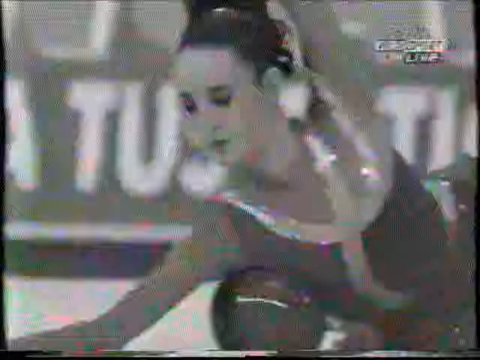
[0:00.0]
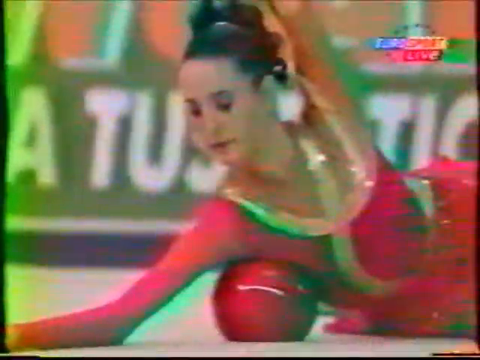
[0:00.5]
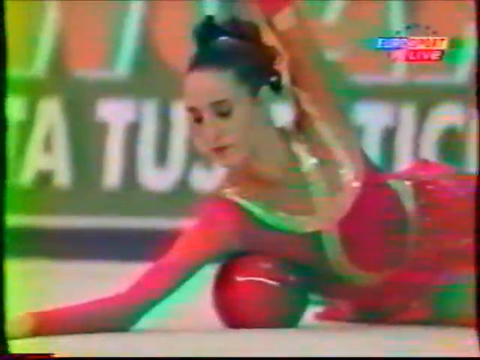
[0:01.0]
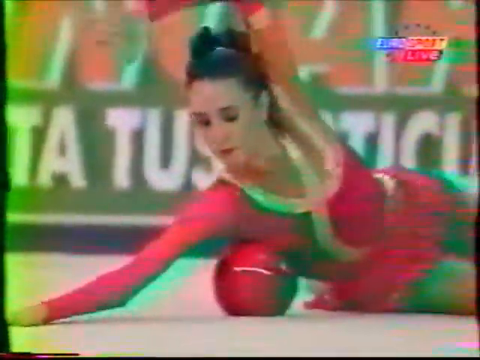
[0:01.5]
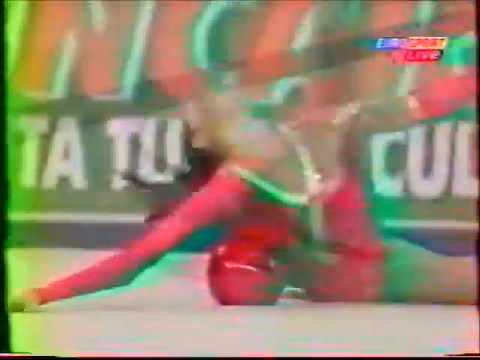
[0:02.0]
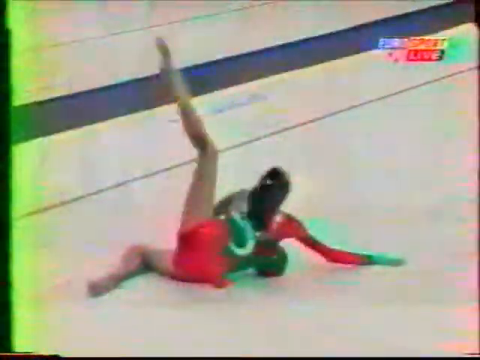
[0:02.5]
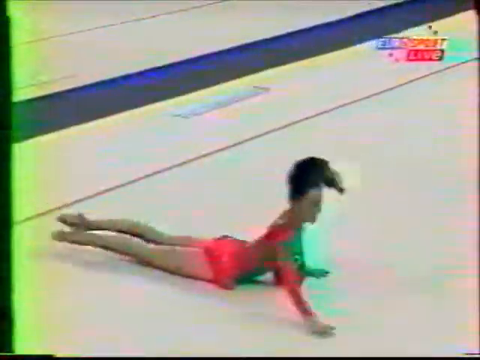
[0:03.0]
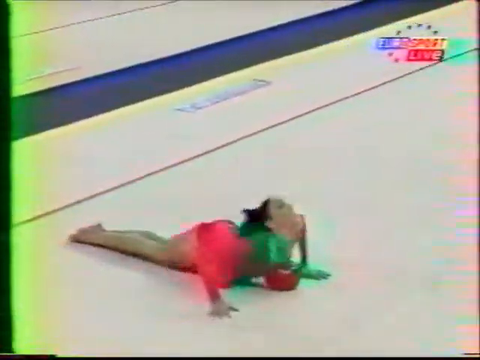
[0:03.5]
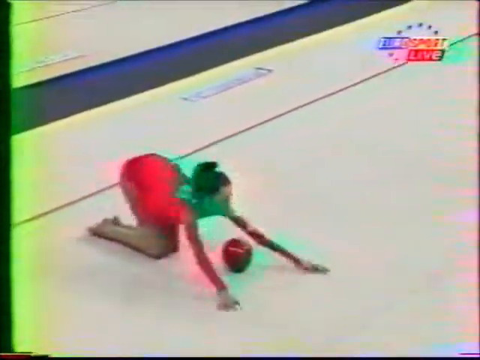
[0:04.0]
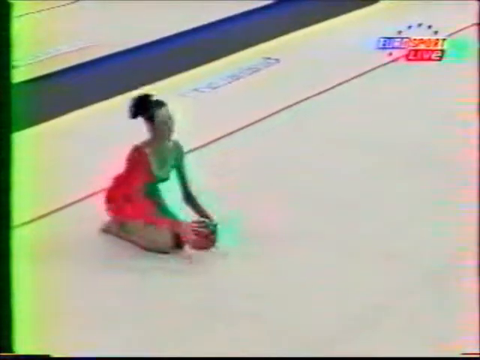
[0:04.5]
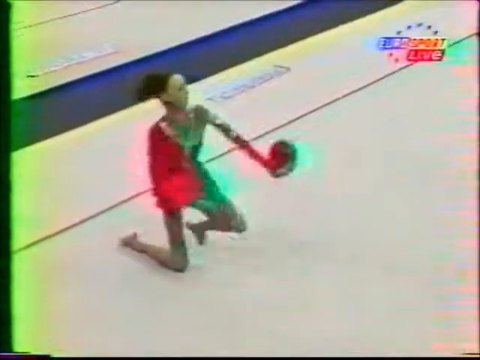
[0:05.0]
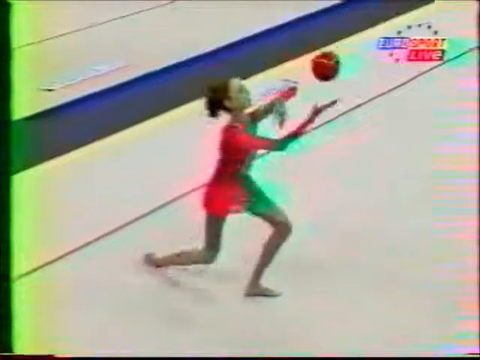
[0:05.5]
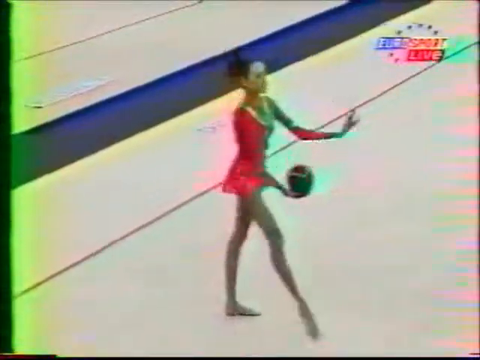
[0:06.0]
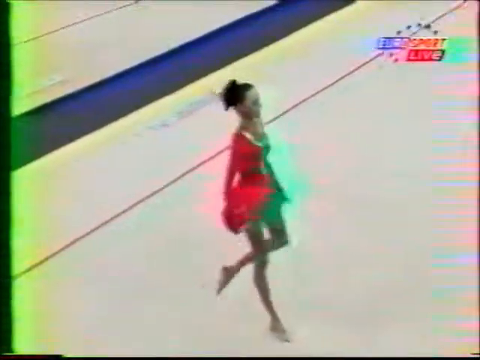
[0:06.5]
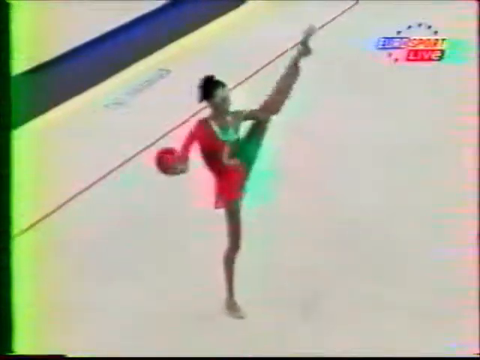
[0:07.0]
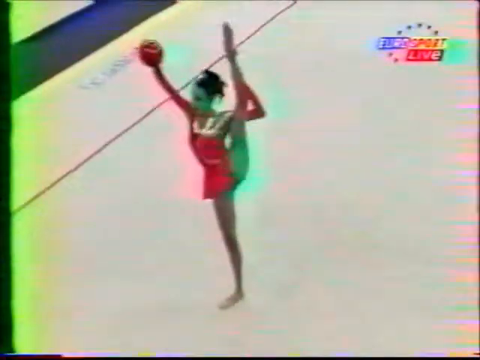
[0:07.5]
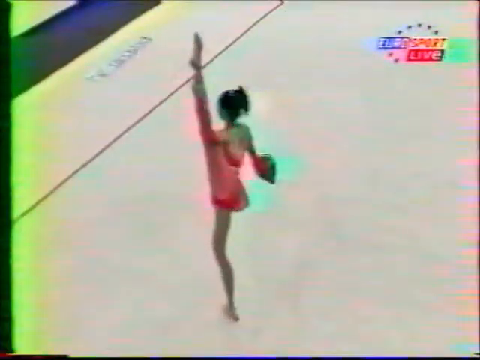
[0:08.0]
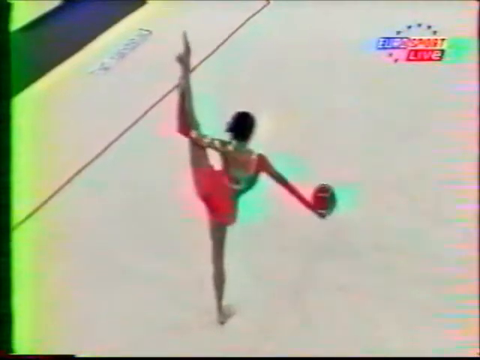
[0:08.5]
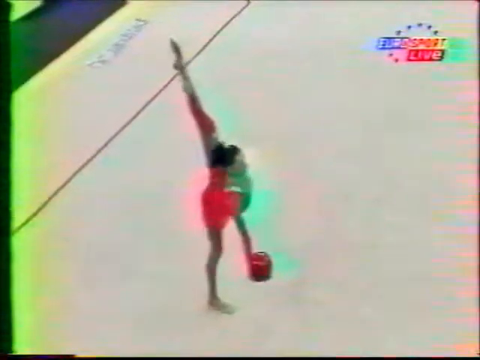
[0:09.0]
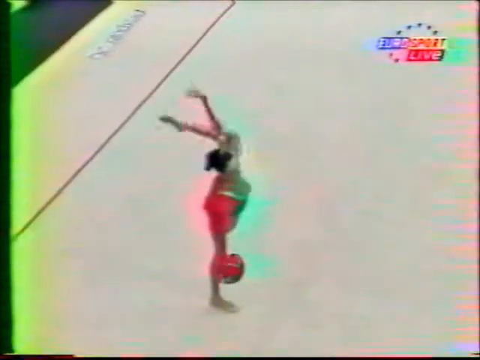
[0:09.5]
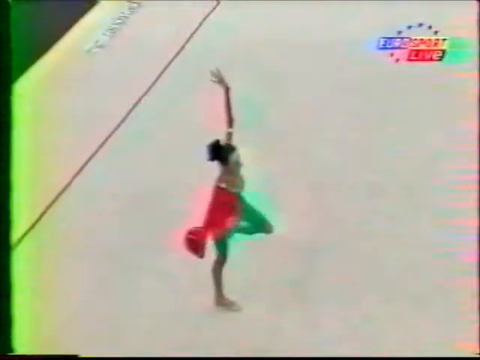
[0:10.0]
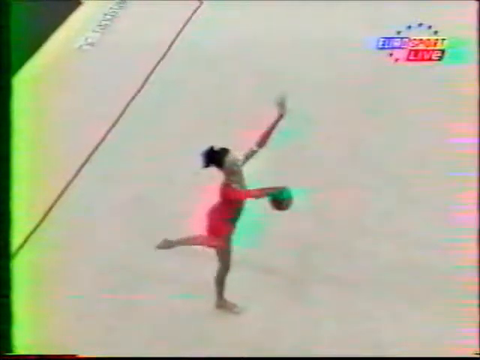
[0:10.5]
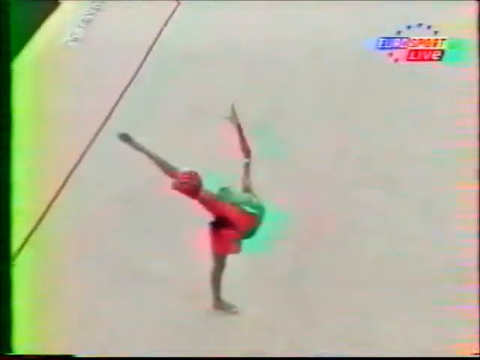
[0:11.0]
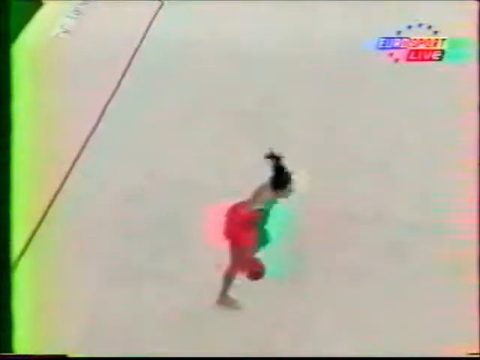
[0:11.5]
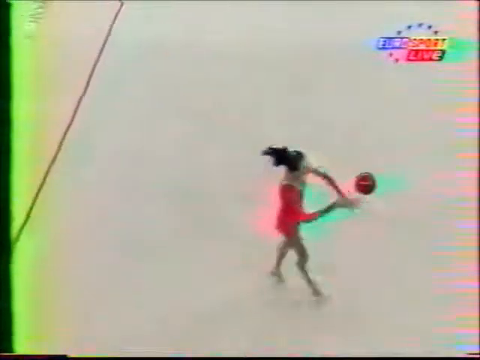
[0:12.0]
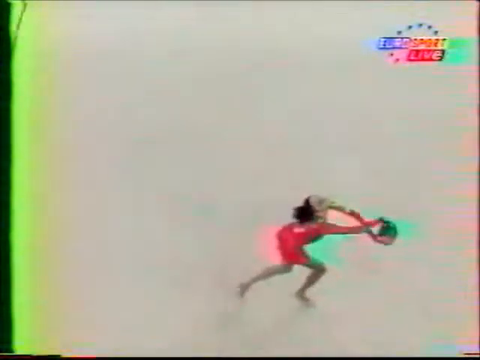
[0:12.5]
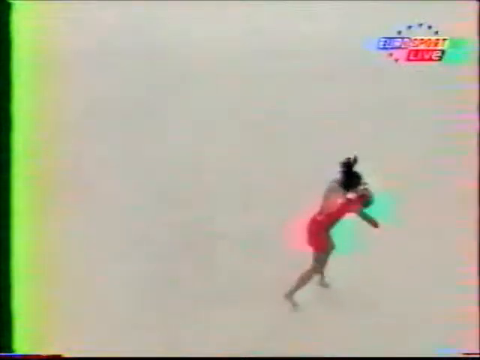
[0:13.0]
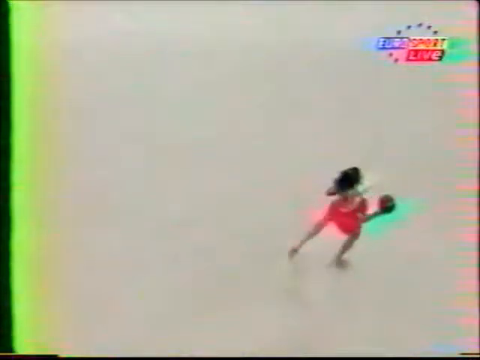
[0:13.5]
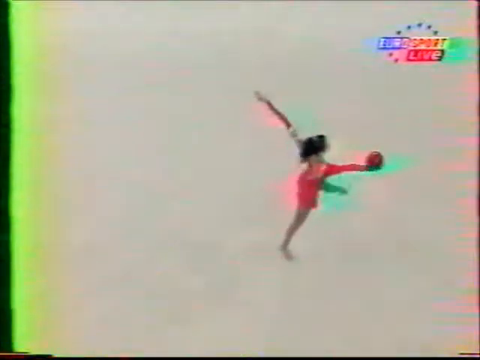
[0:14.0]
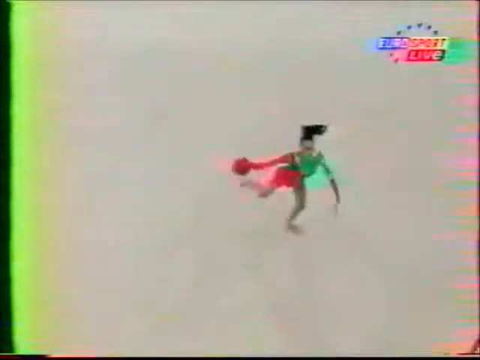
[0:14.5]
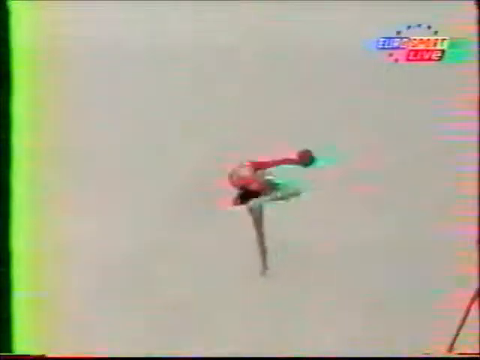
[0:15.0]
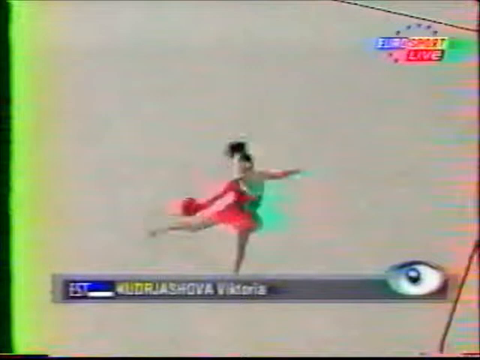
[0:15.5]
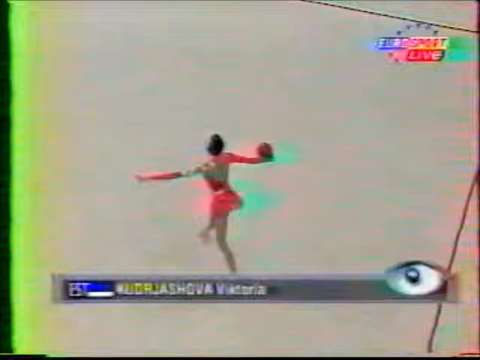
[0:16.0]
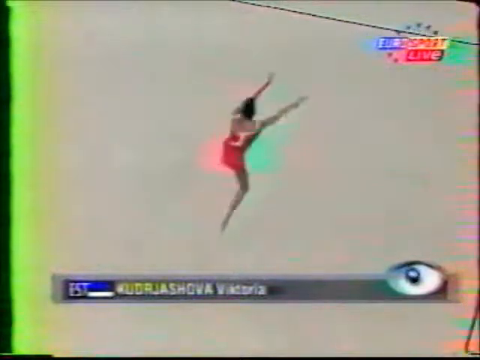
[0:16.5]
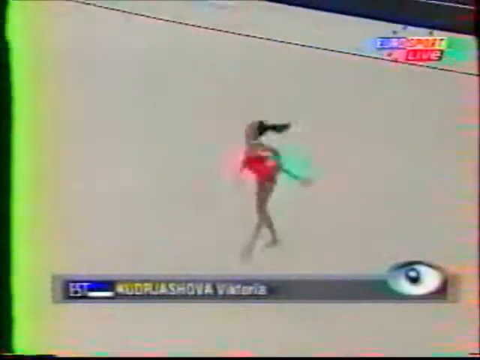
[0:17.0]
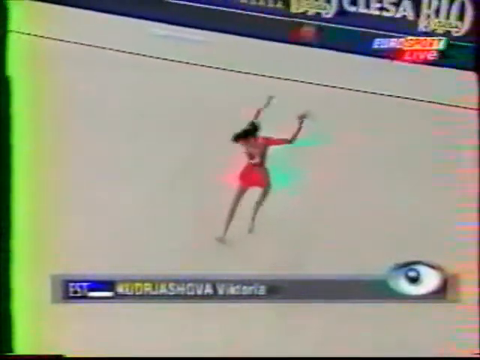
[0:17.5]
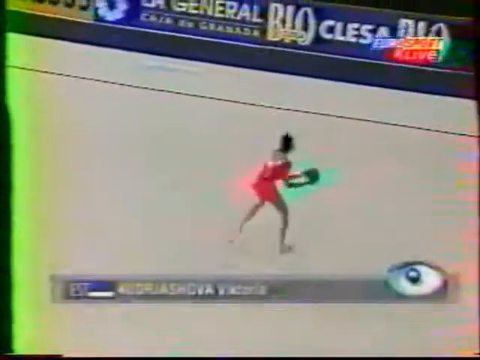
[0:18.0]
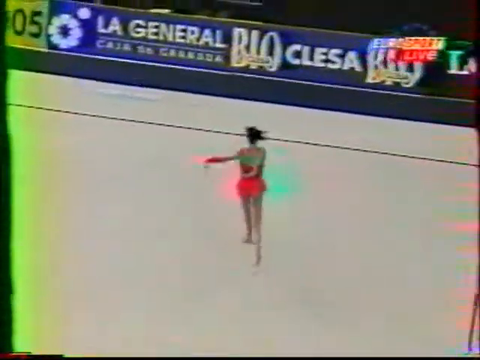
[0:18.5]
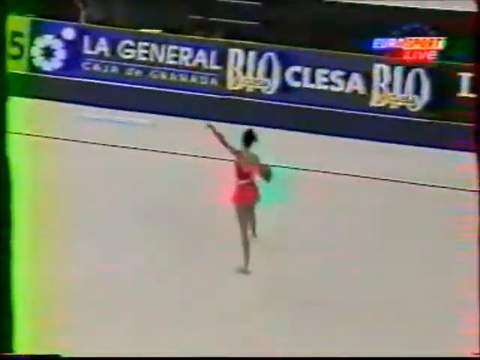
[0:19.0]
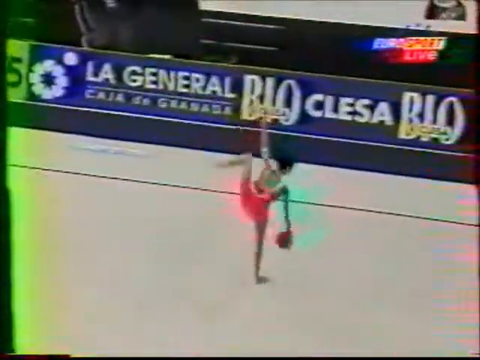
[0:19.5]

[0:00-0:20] The video opens in black and white on a woman and then turns to color, very grainy. She appears to be dancing on the floor with a ball. She starts on the floor and slowly gets up while moving around, moving her leg up, dancing around and moving the ball around. She throws the ball up in the air and catches it, holds her leg up in the air and spins around. She appears to be in a large stadium, with some advertisements in the background. She wears a red outfit and has black hair tied up, and she looks like a younger adult. It is unclear whether this is a sport or a dance routine. The footage appears to be older and focuses on just one woman. Text is visible in the top right of the screen.